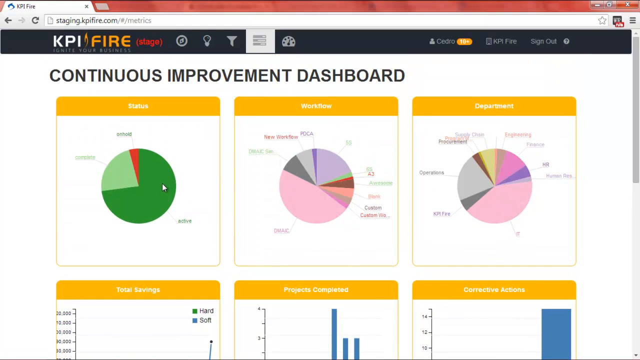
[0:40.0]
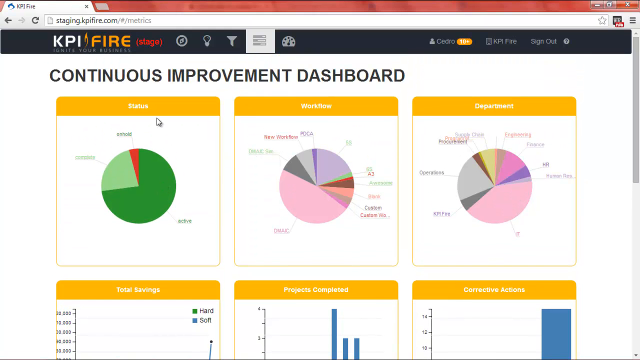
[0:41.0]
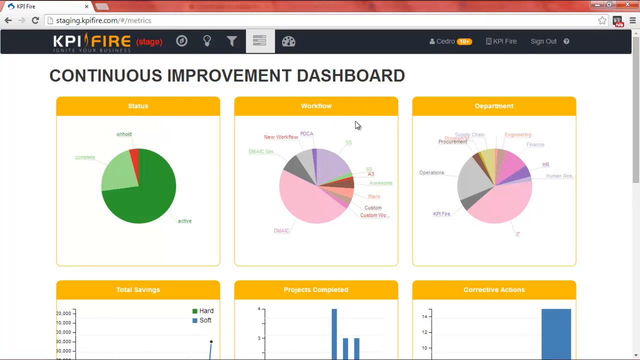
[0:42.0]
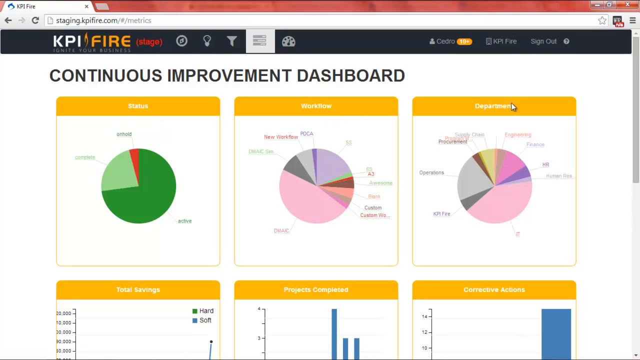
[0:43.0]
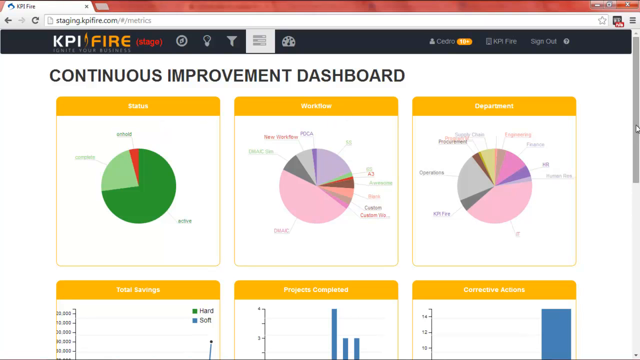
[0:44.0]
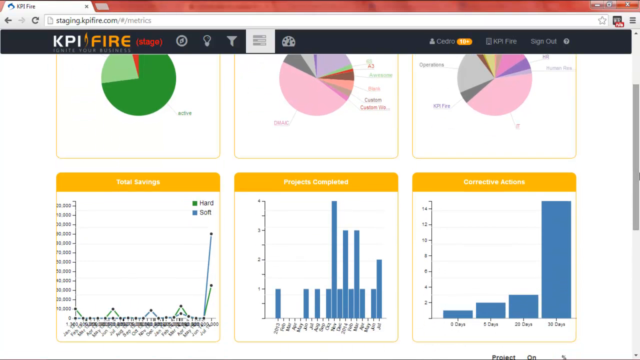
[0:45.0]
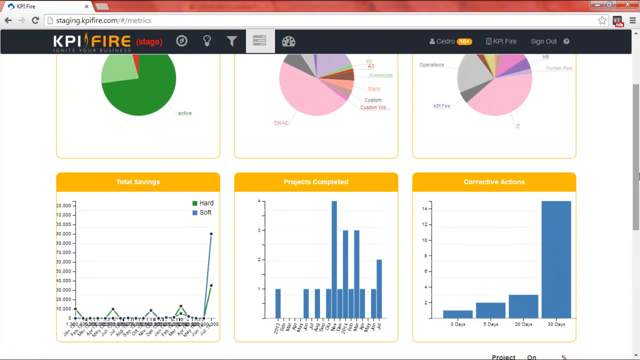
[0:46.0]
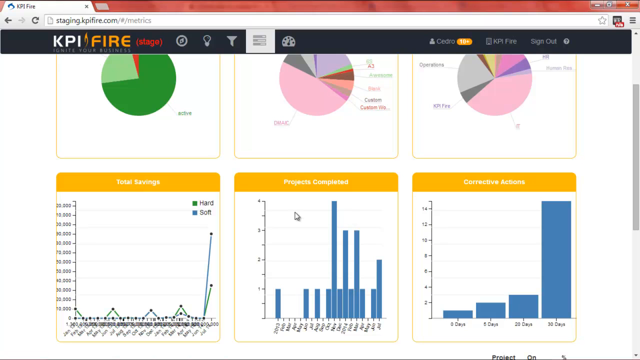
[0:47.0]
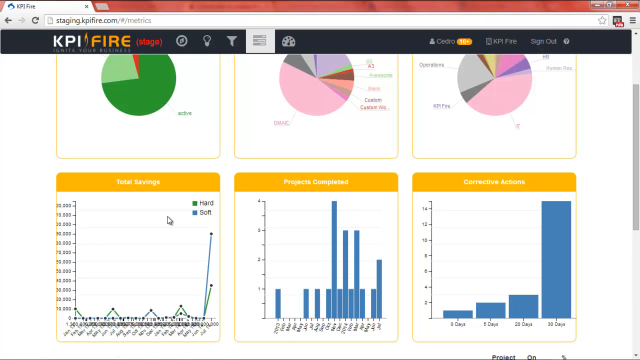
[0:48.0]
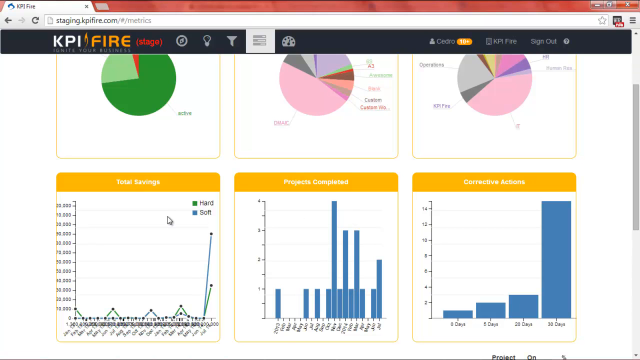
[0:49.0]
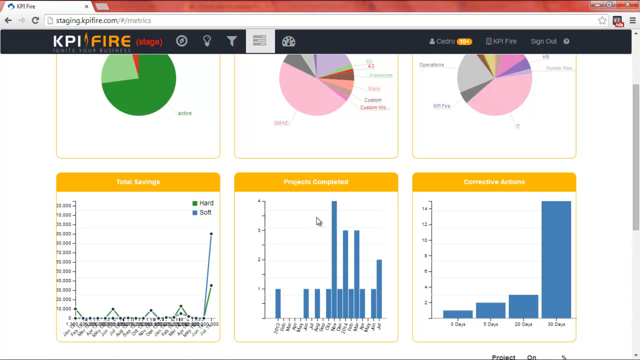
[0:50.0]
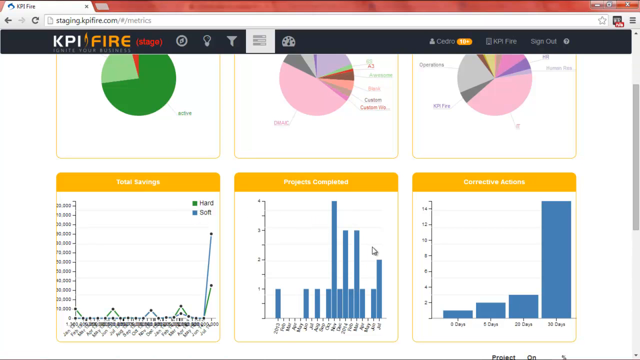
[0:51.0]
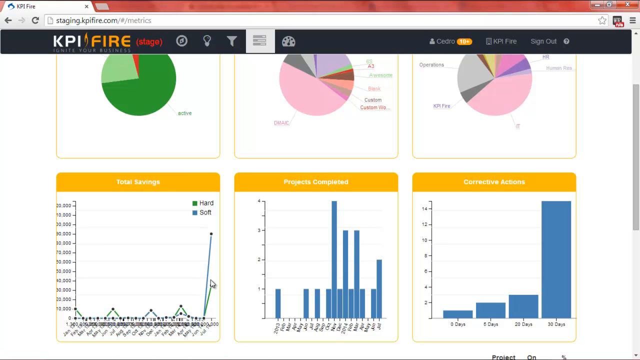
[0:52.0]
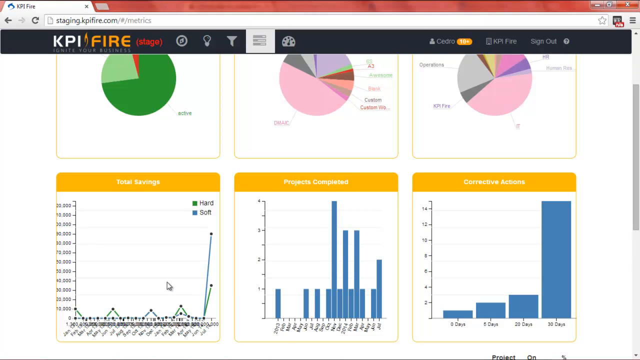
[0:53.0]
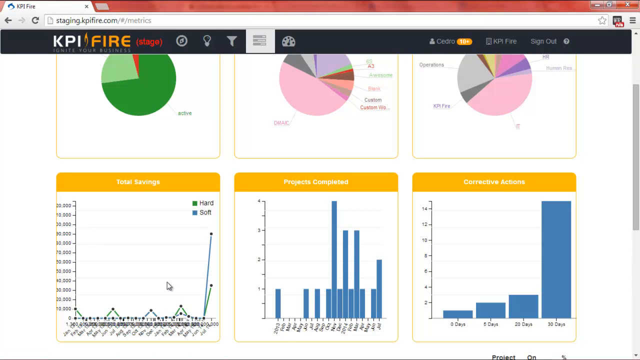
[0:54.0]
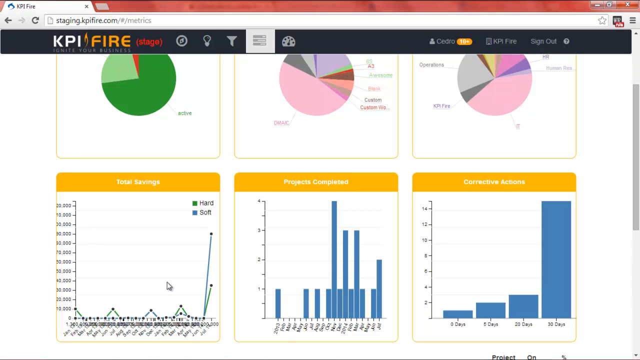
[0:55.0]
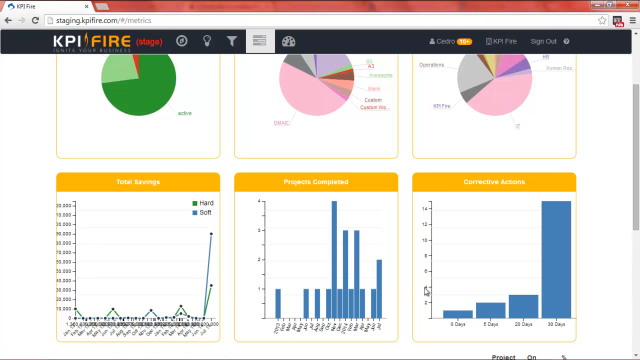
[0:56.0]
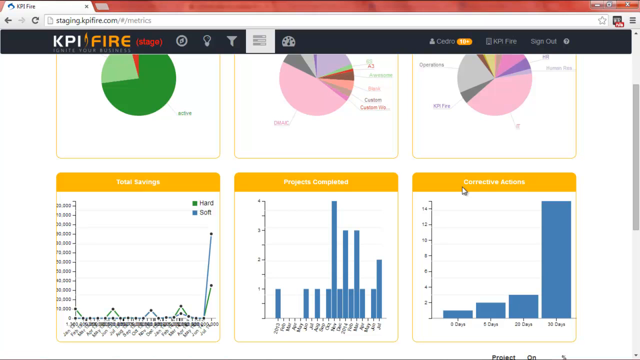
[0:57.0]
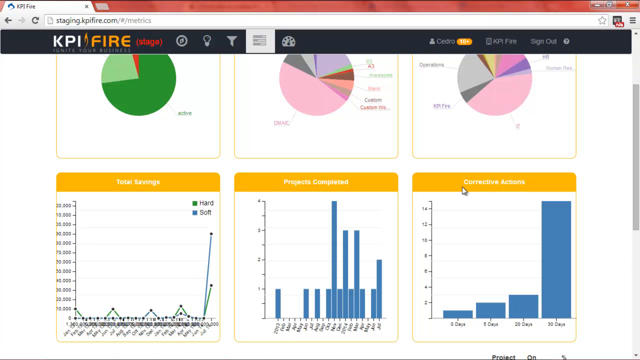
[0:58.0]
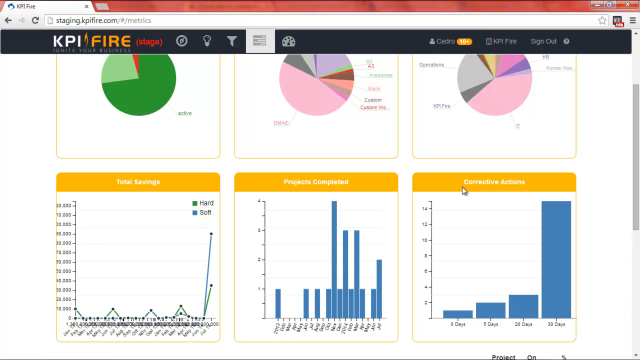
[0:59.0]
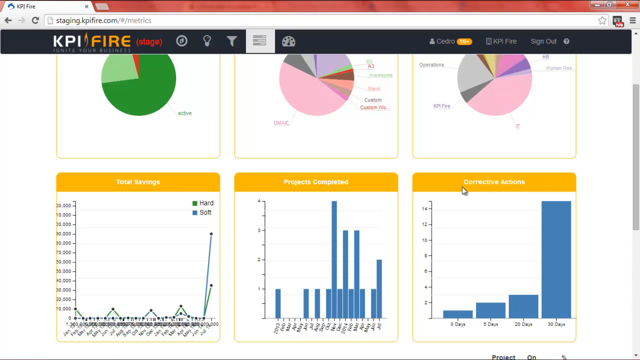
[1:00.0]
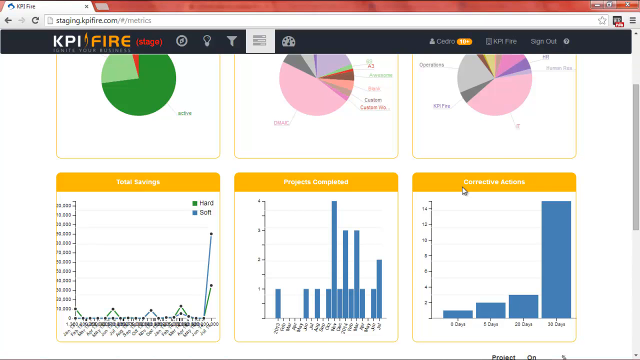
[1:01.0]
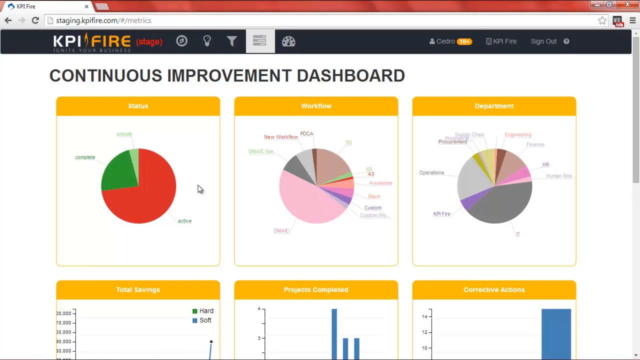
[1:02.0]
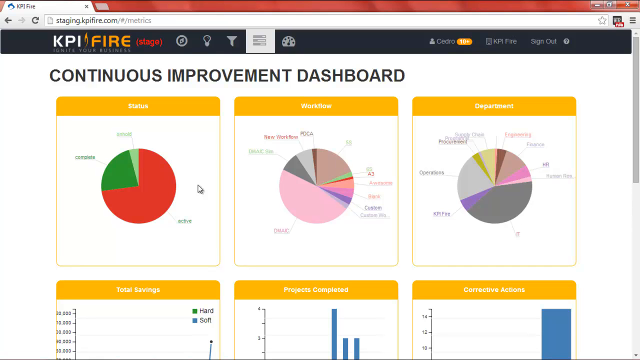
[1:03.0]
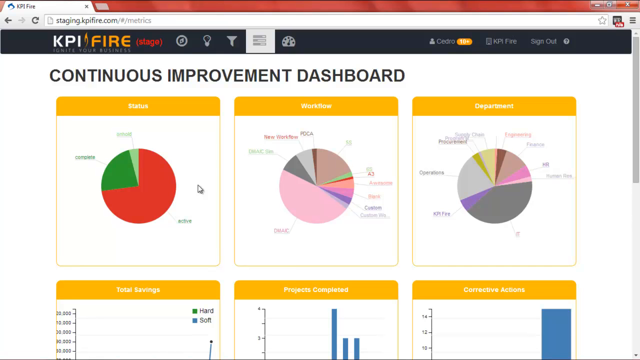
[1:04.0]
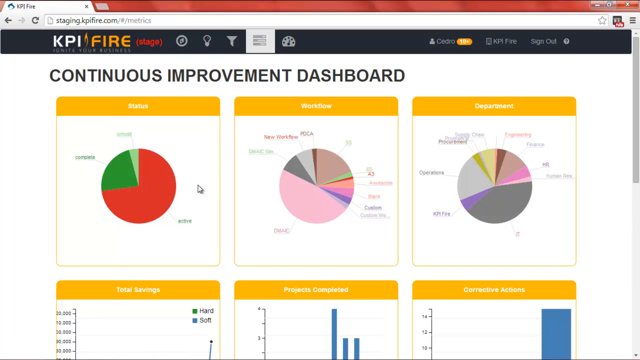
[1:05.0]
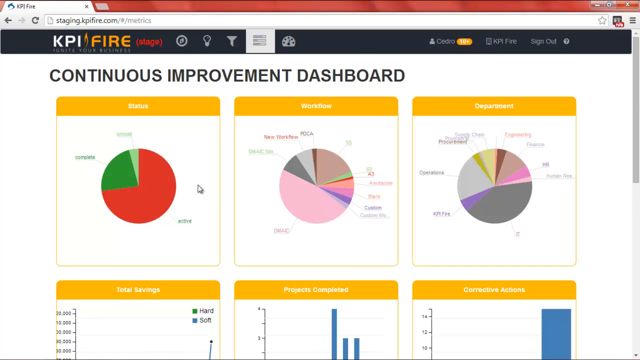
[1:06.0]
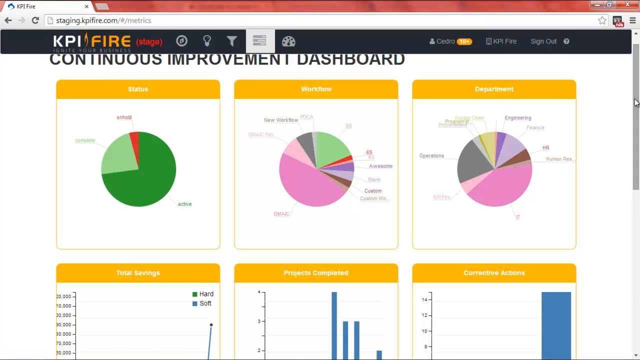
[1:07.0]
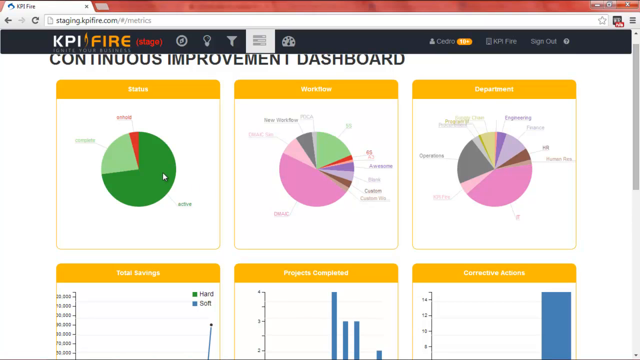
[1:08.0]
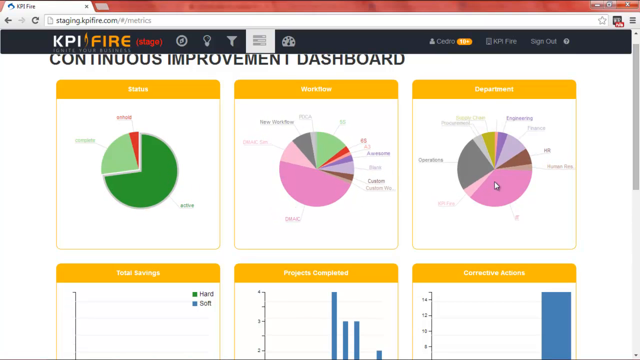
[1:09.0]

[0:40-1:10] The cursor goes over each of the three pie chart titles, hovering first over status, then workflow, then department. The user then moves the cursor to the right side of the screen and pulls the scroll bar down; around halfway down the page, the three graphs appear. The mouse starts on the middle graph, moves to the left above the total savings graph, then back to the middle projects completed graph, where it briefly hovers over some of the statistic points. The cursor then goes back to the total savings graph and finally to the corrective actions graph, where it is left on the title. The user then scrolls all the way back to the top, showing the three pie charts, and leaves the mouse on top of the status chart, where the pie chart changes from red to green. The user clicks the first pie chart and an animation appears separating its sections.